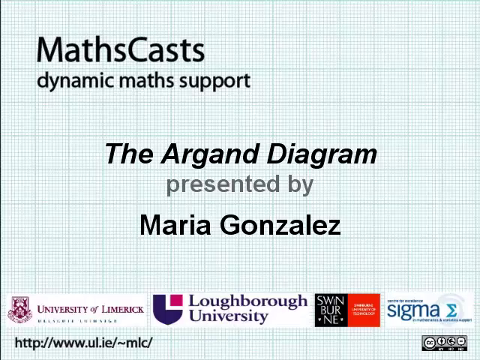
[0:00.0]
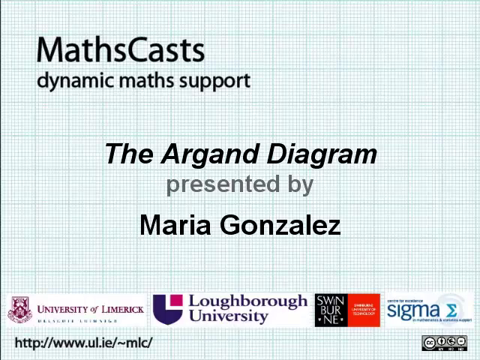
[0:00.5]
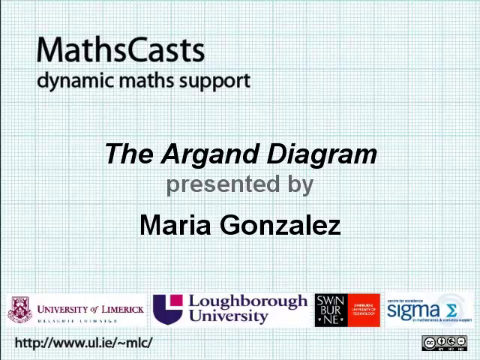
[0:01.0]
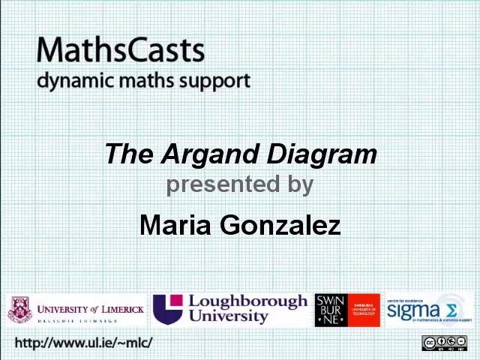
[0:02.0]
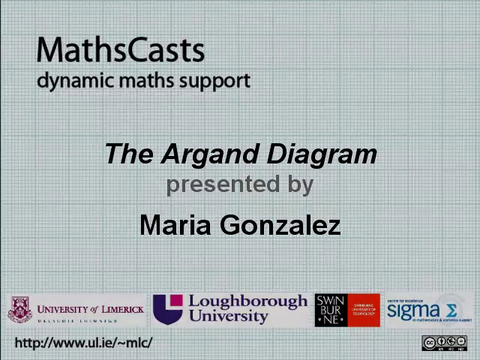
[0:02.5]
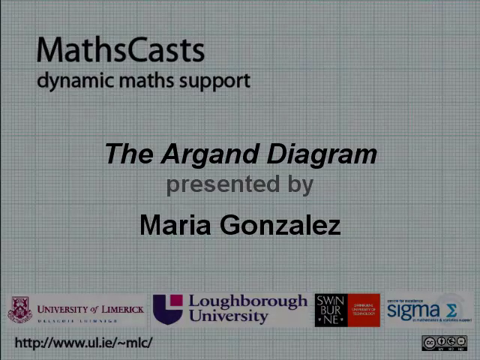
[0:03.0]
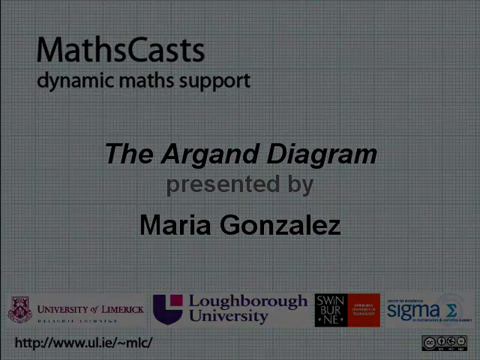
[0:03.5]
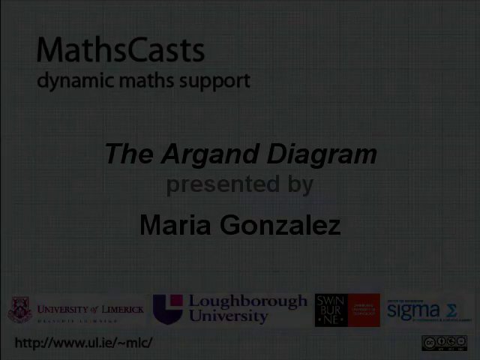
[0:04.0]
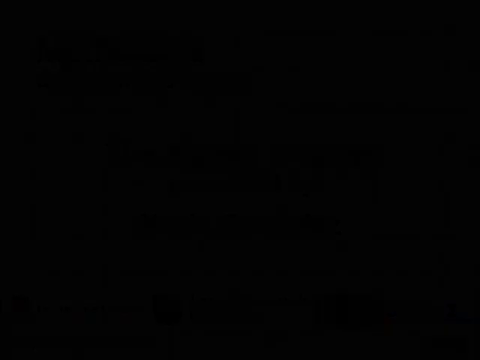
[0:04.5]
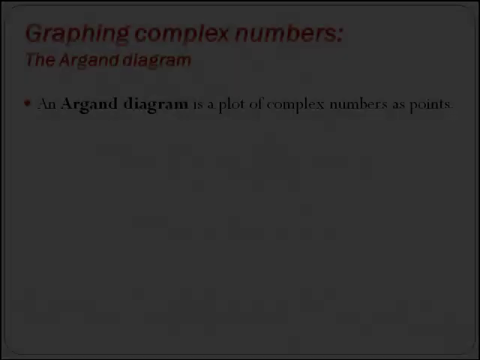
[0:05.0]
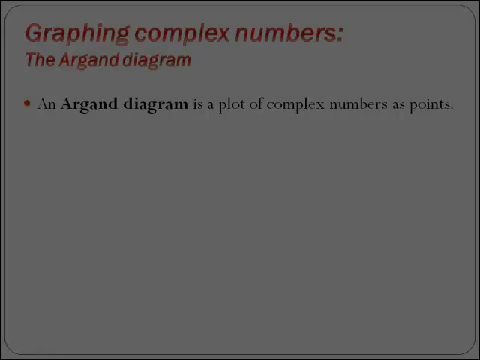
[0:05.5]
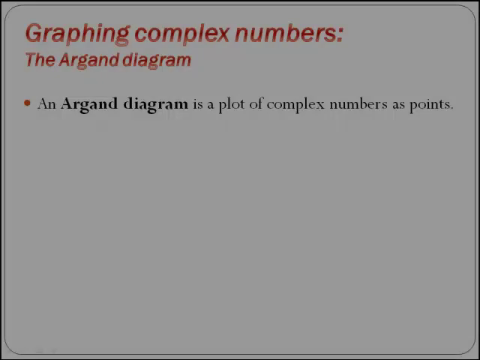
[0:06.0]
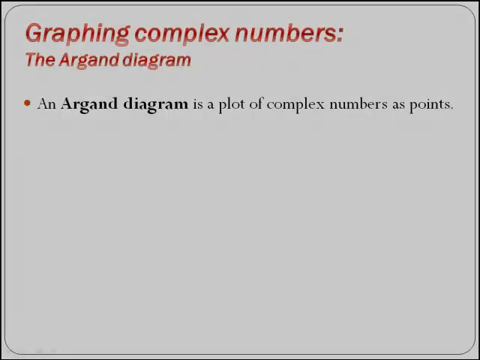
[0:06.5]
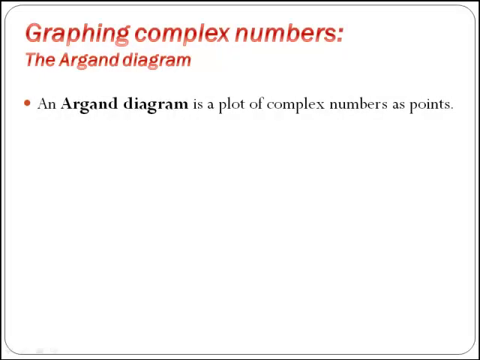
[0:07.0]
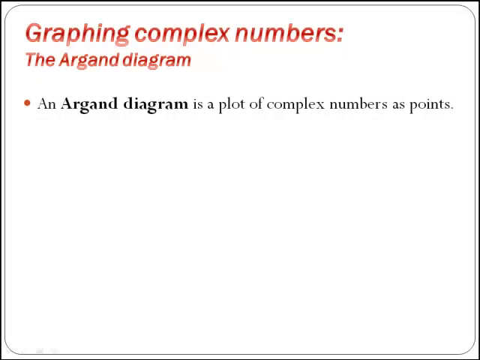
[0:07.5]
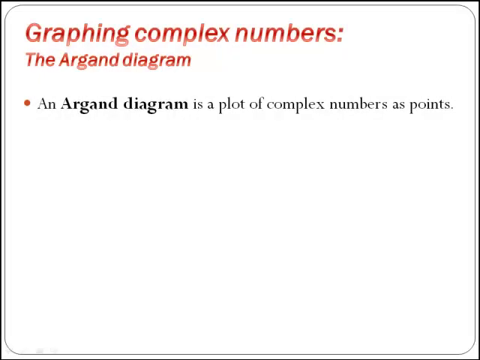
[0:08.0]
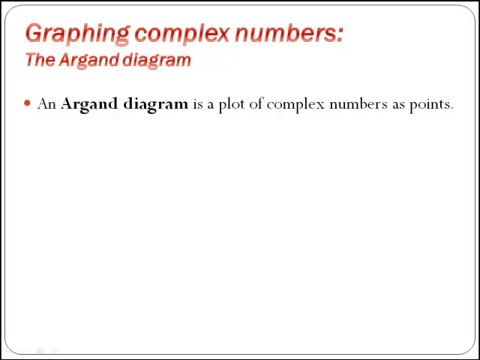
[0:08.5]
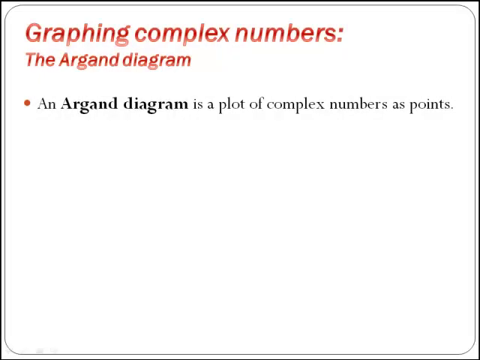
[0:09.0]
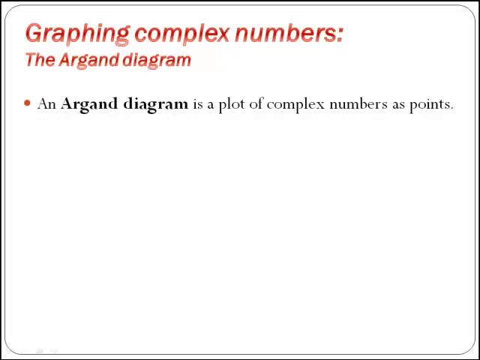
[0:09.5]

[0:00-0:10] The video is a presentation on the Aragon diagram. The opening screen has a blue background made up of squares. All of the lettering is in bold black except "presented by." It reads "MathCast" and "dynamic math support," and names the presenter as Maria Gonzalez. University logos and a couple of company logos are at the bottom. This first slide fades out and then fades back in to a white background with a gray border. At the very top, in bold red, it reads "graphic complex number, the Aragon diagram." Below is a single bullet point stating that the Aragon diagram represents complex numbers as a point.